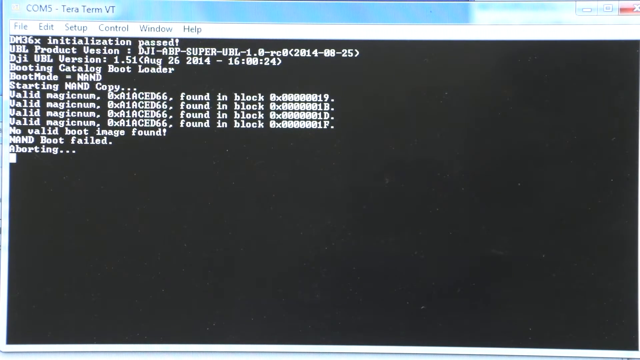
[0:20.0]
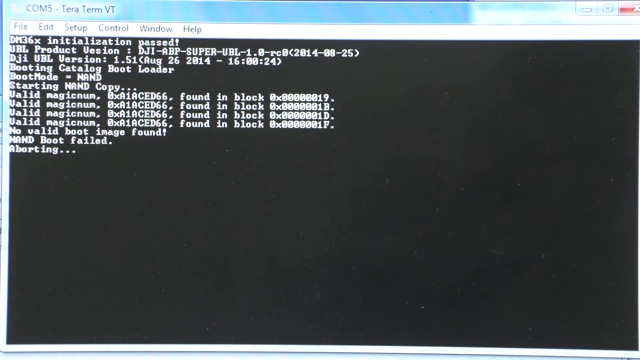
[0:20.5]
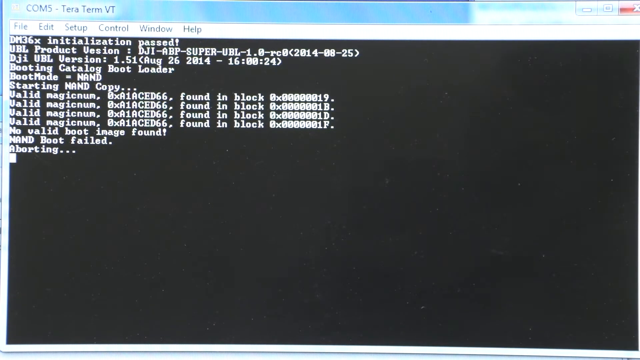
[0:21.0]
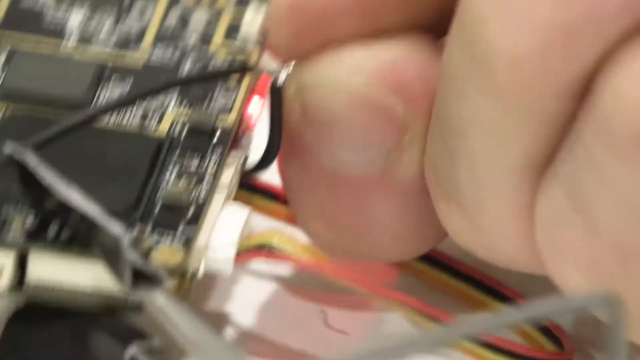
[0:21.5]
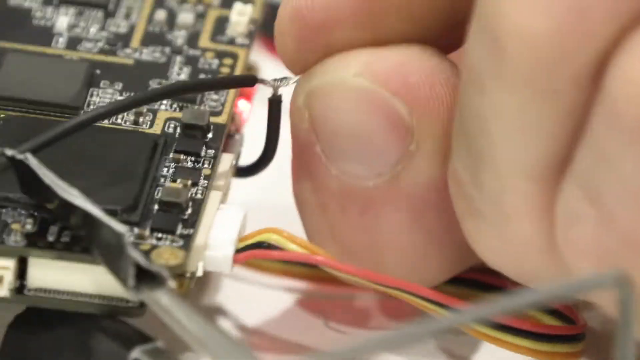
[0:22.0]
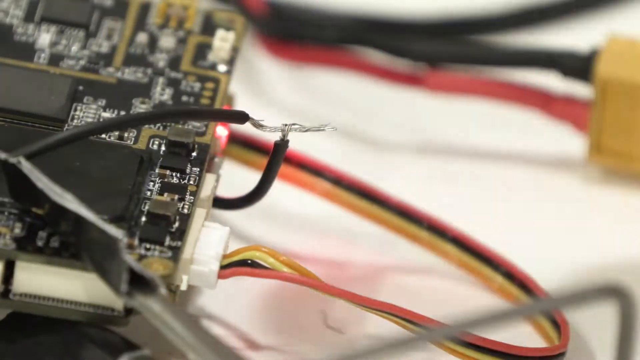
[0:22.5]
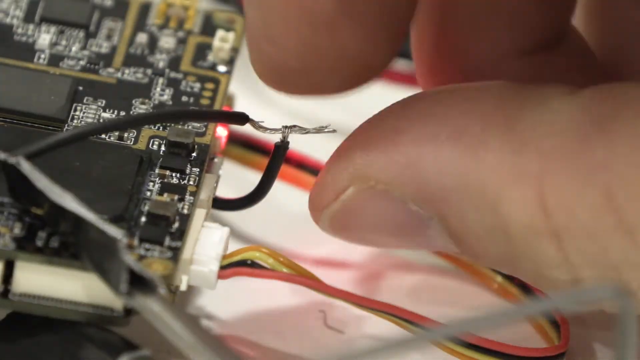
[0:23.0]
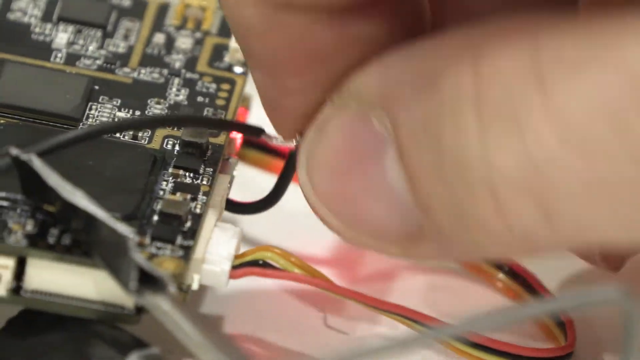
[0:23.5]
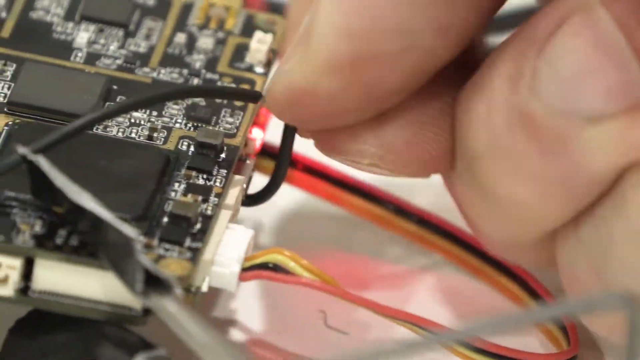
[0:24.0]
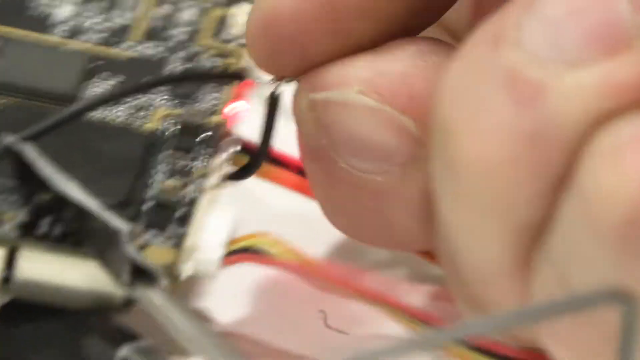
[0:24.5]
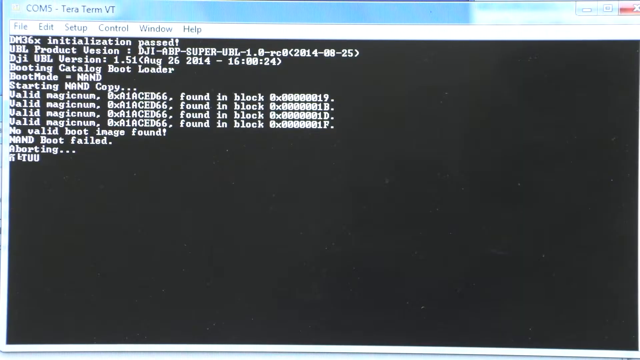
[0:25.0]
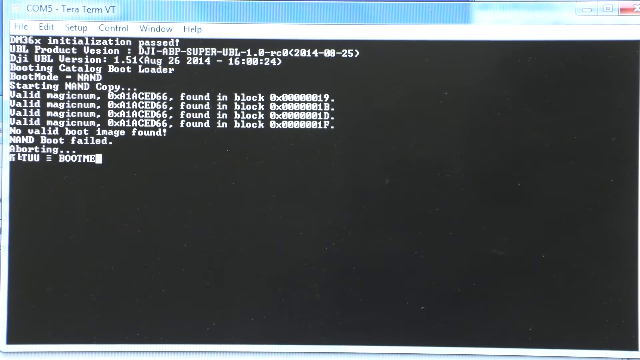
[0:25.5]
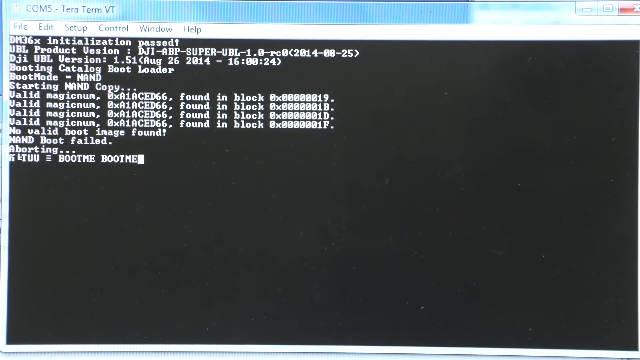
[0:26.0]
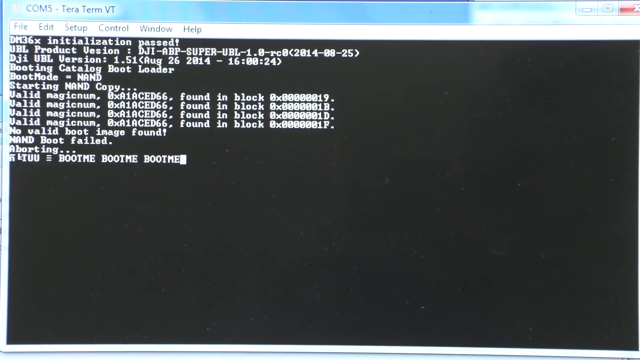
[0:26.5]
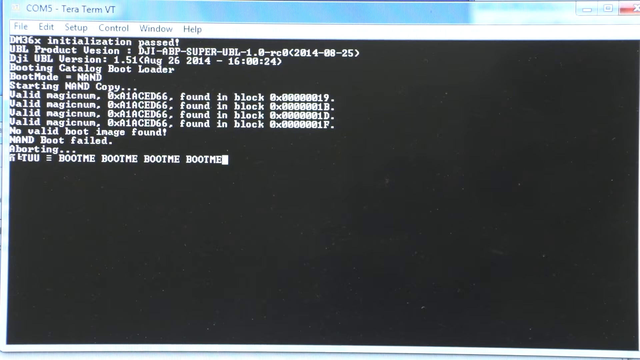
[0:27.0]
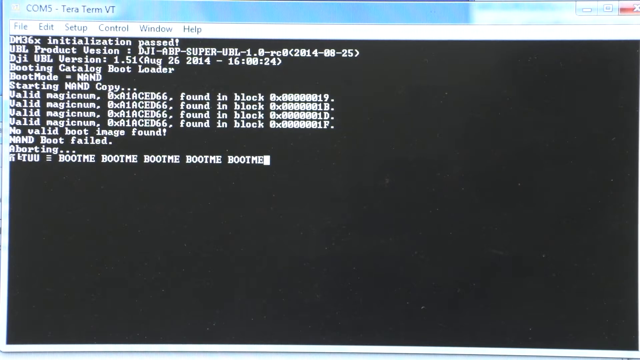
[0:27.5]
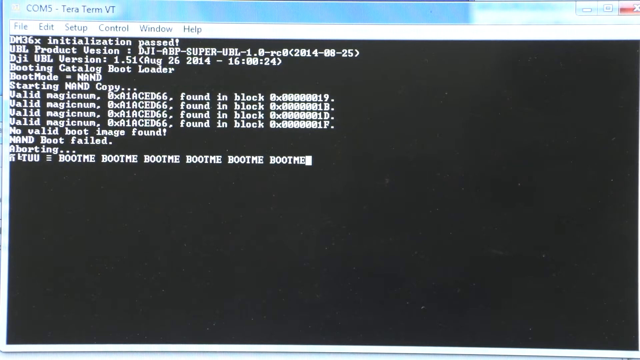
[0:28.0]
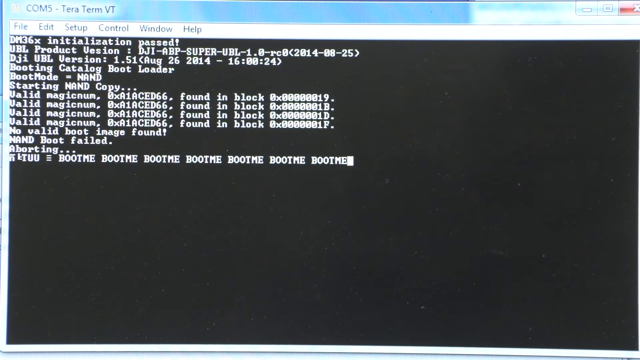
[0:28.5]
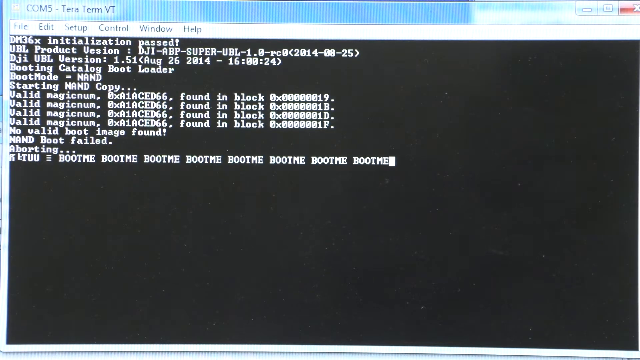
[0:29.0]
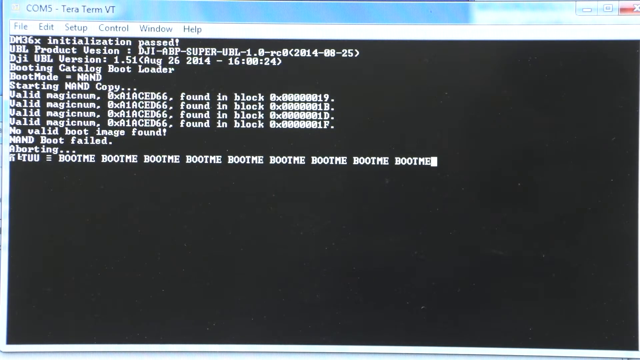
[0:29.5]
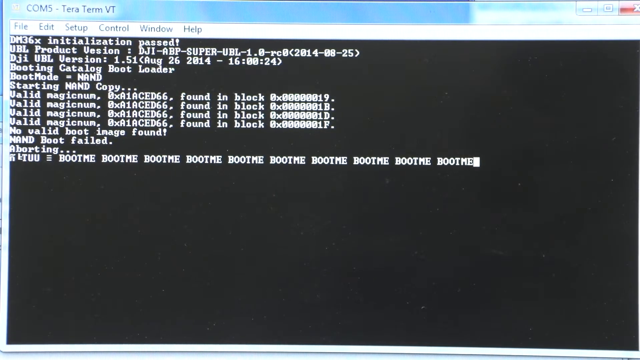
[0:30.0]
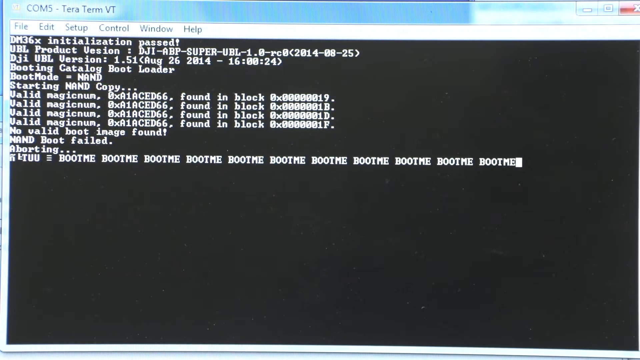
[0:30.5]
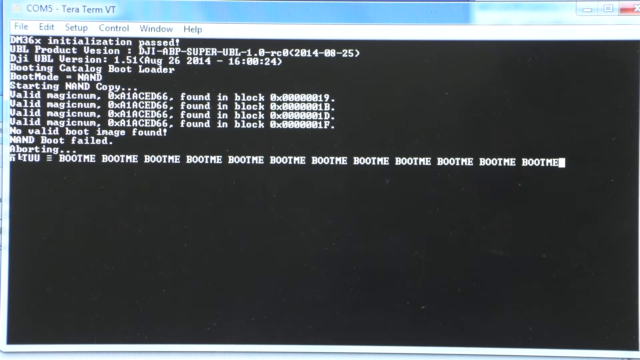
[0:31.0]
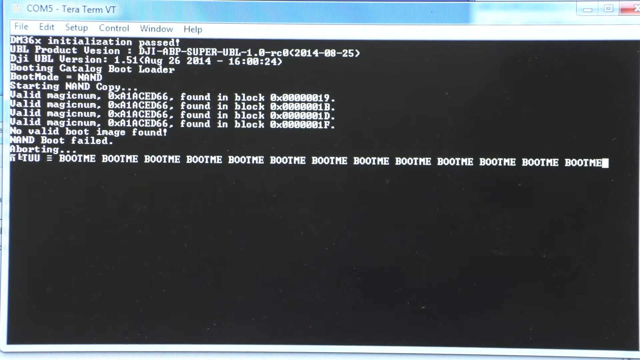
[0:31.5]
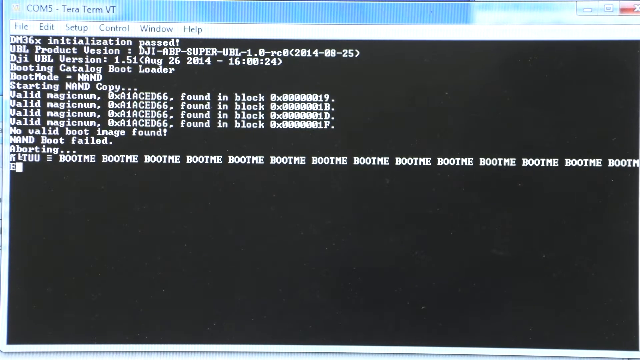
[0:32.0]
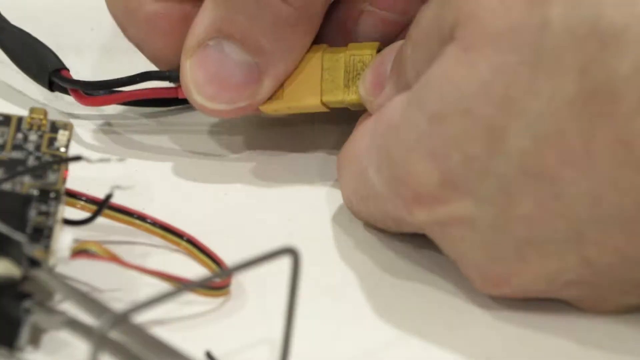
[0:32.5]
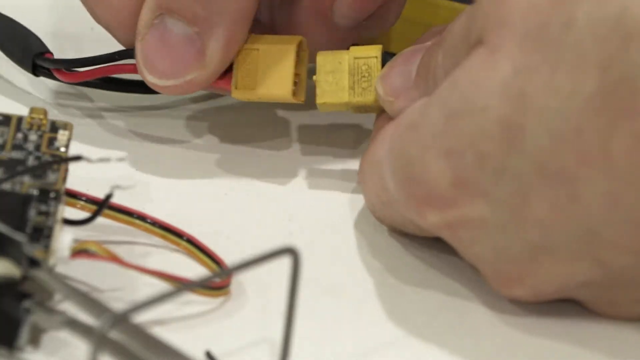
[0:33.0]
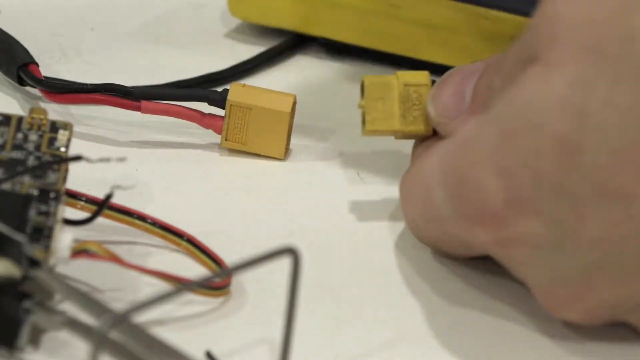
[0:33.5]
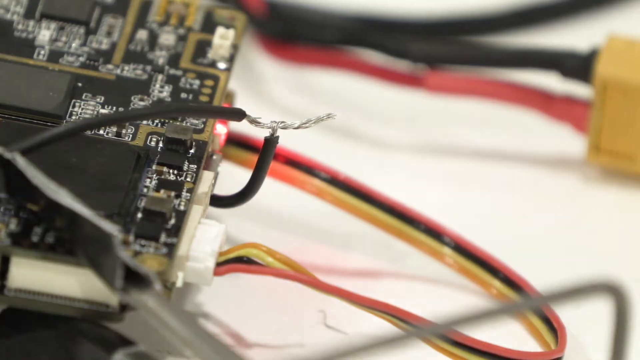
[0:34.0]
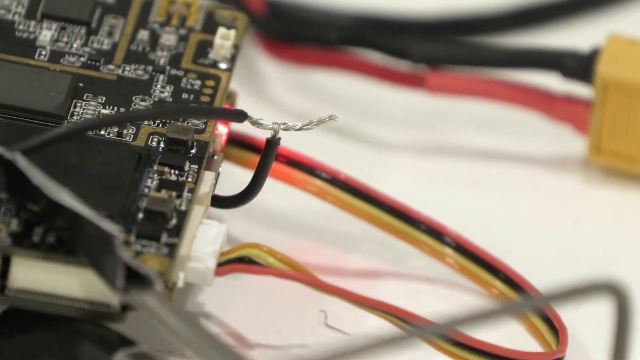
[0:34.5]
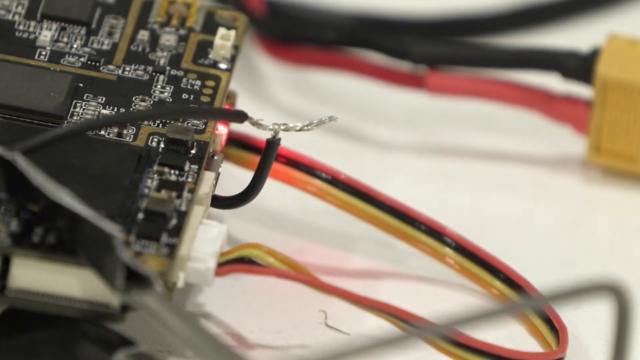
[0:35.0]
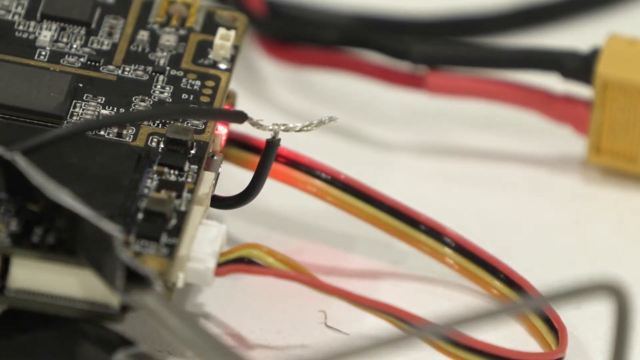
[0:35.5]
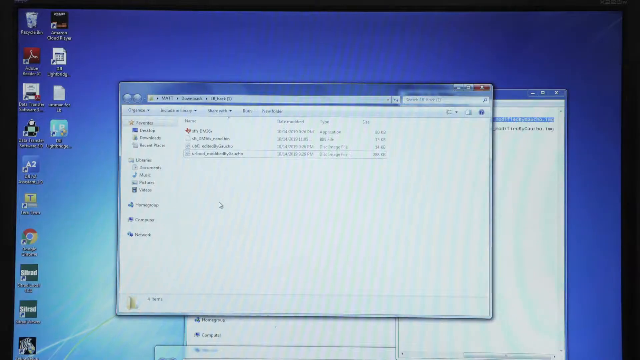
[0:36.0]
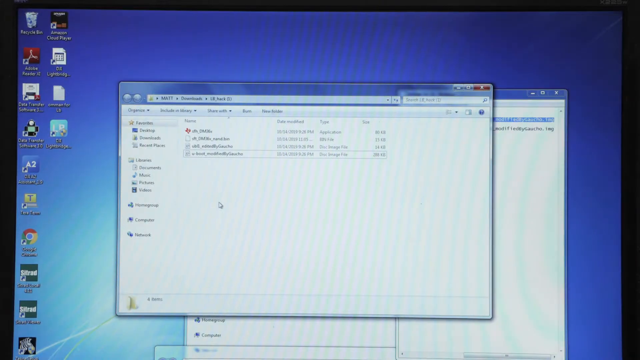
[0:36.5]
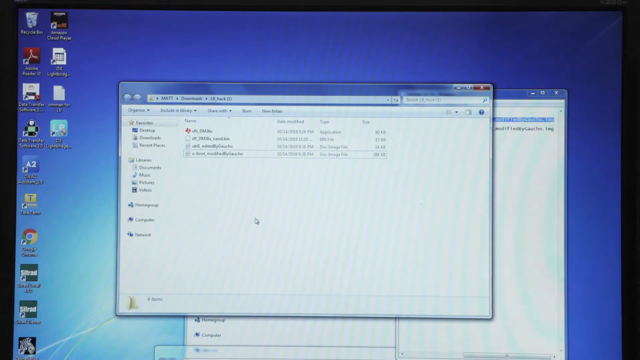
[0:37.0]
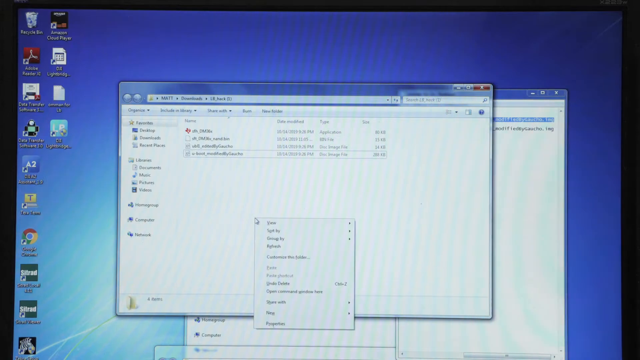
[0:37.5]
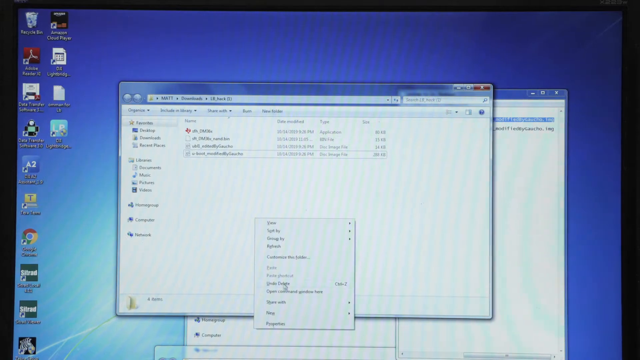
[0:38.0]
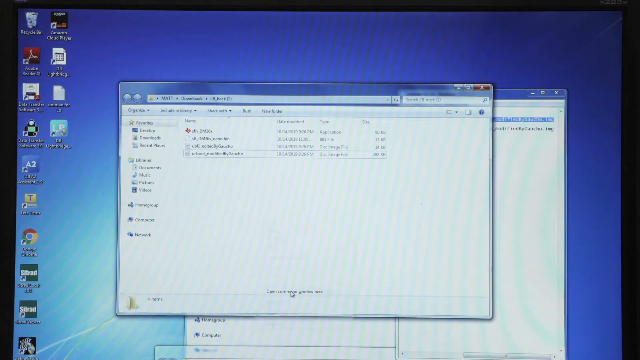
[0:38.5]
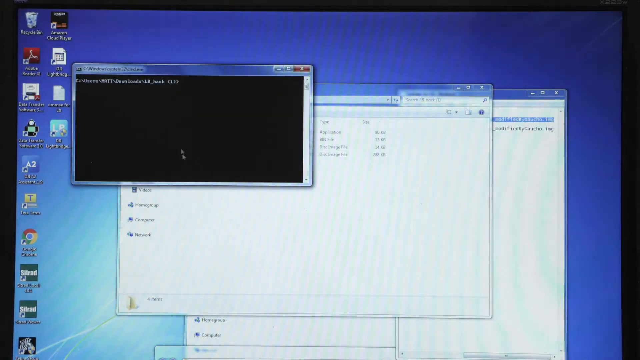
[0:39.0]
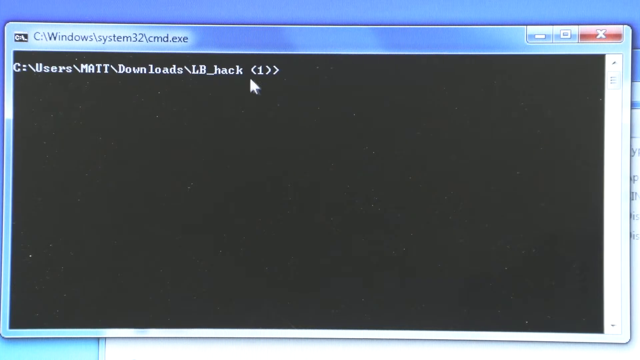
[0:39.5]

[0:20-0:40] A code page shows a number of lines of code in white text on a black background, with File, Edit, Setup, Control, Window and Help tabs above. A man's hand twists together two wires, each with a small silver wire protruding out of it, twisting them once or twice so they are tightly intertwined. The code page pops up and says "boot me" multiple times, with the code moving quickly. He then unplugs the dark yellowish piece that he had plugged together earlier, and the view zooms back in on the computer chip for a second before returning to the Windows home page, where a few more dialog boxes quickly appear. The code box then appears with white code text on a black background.